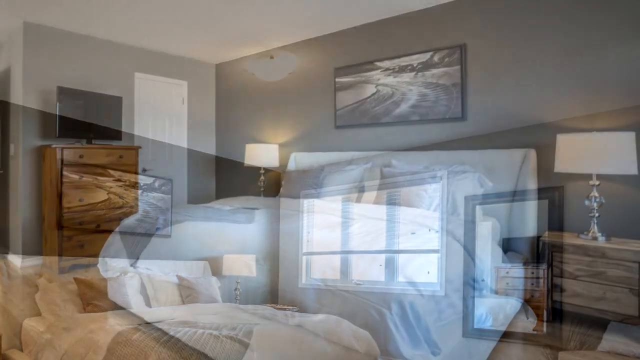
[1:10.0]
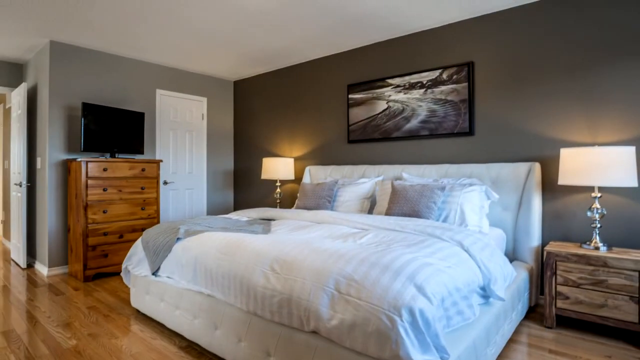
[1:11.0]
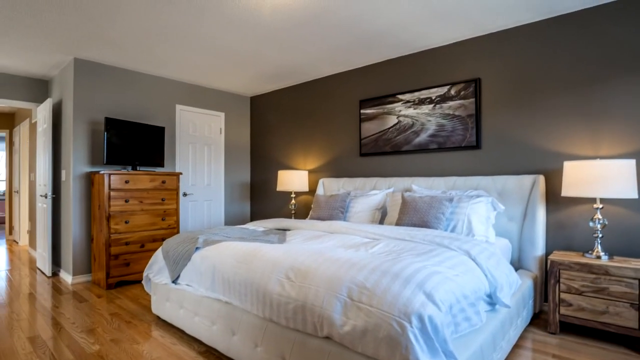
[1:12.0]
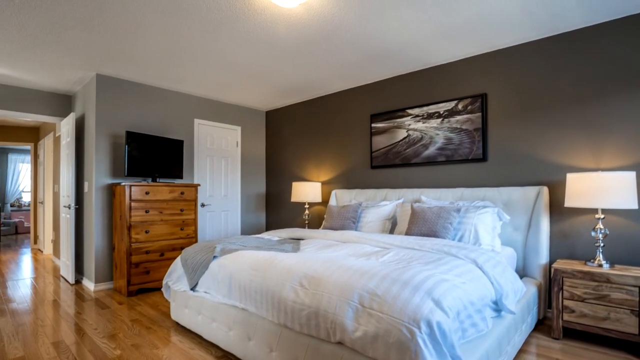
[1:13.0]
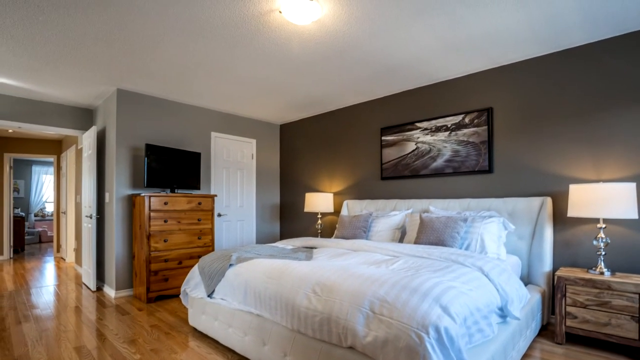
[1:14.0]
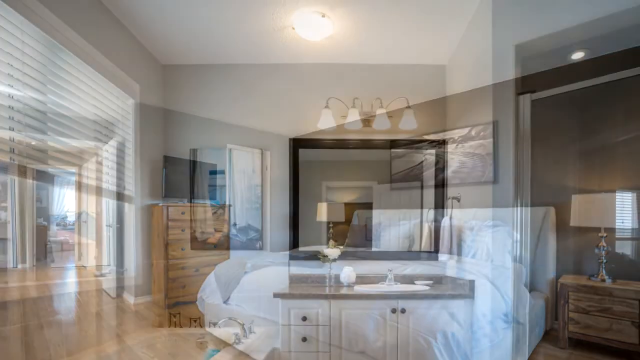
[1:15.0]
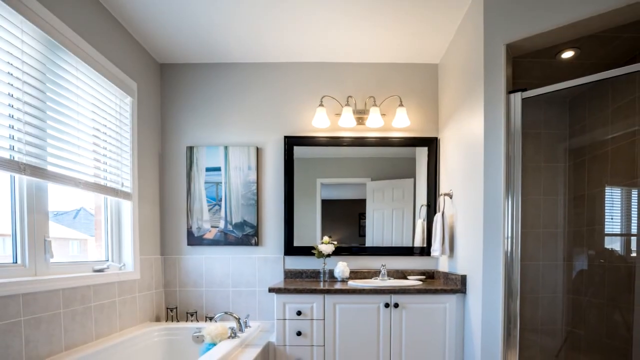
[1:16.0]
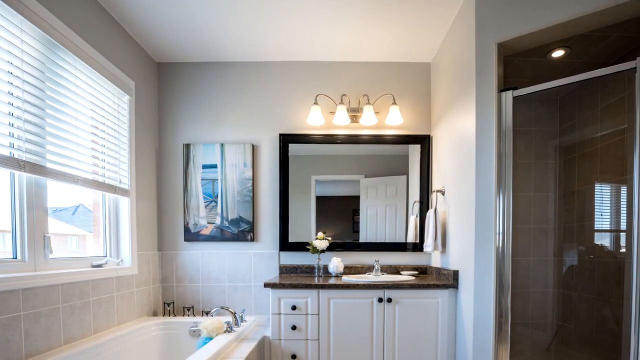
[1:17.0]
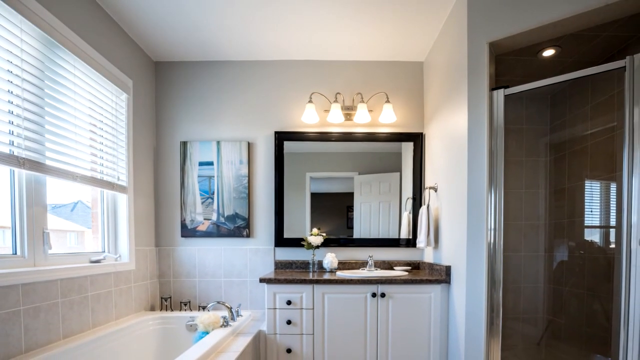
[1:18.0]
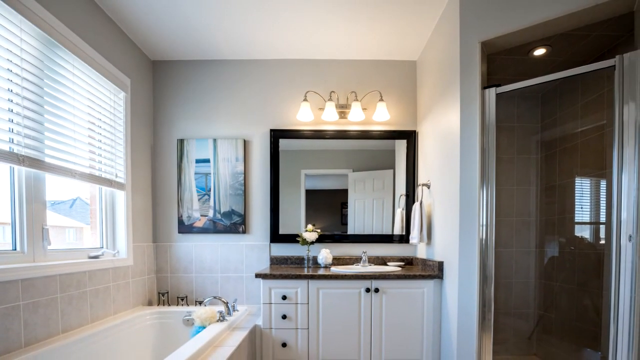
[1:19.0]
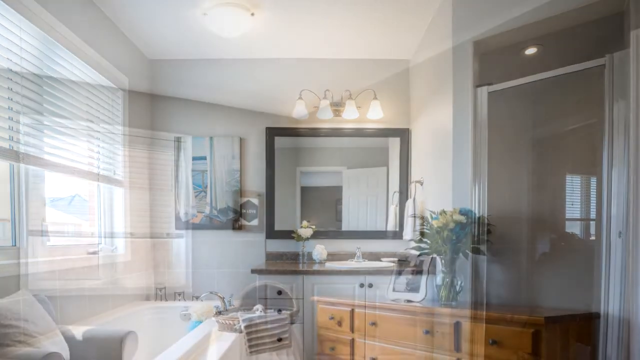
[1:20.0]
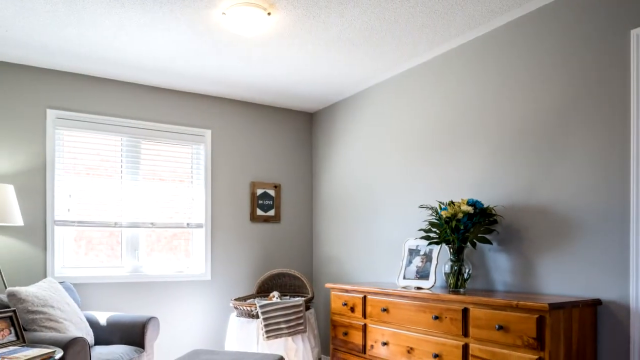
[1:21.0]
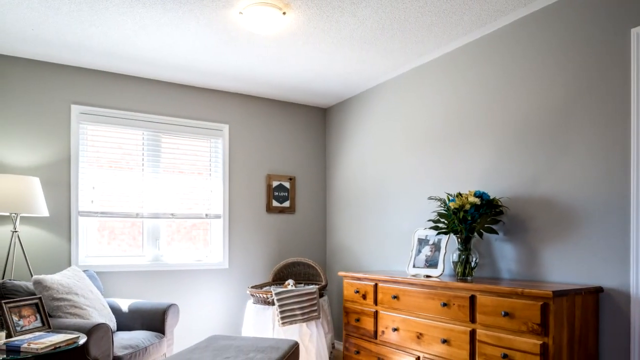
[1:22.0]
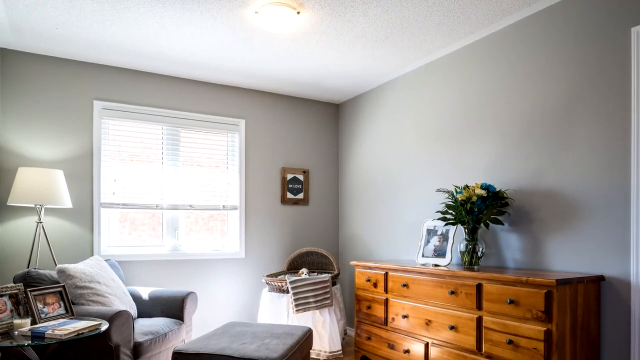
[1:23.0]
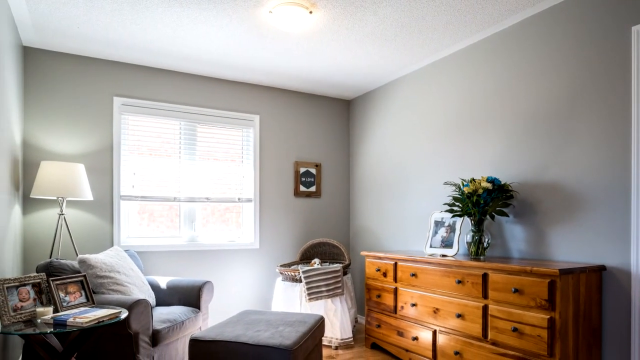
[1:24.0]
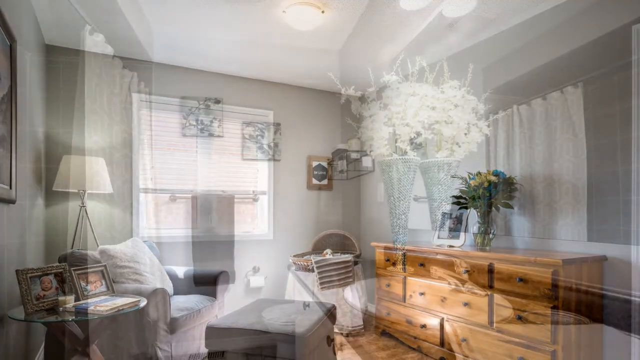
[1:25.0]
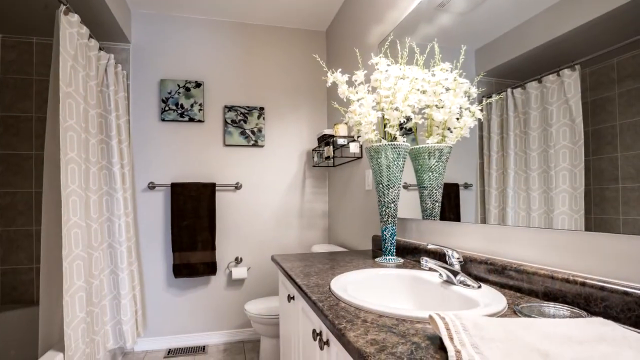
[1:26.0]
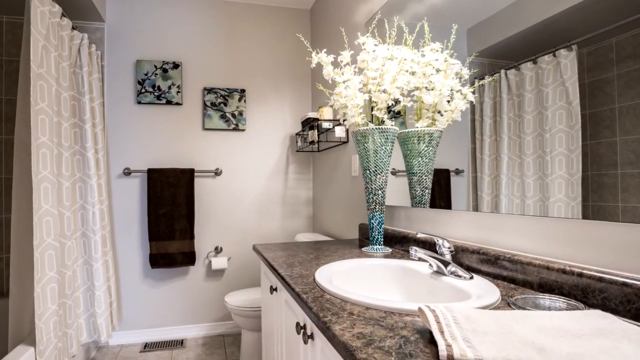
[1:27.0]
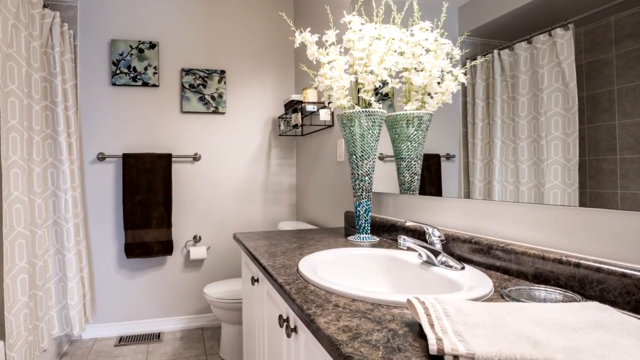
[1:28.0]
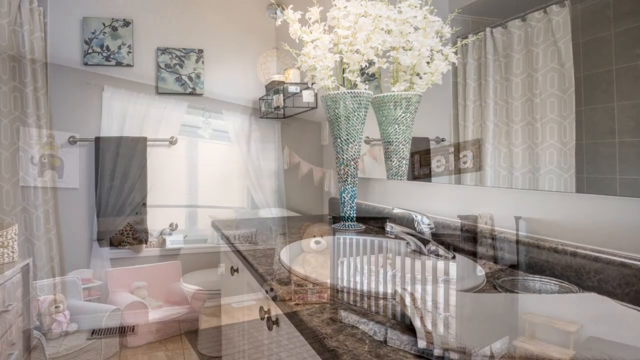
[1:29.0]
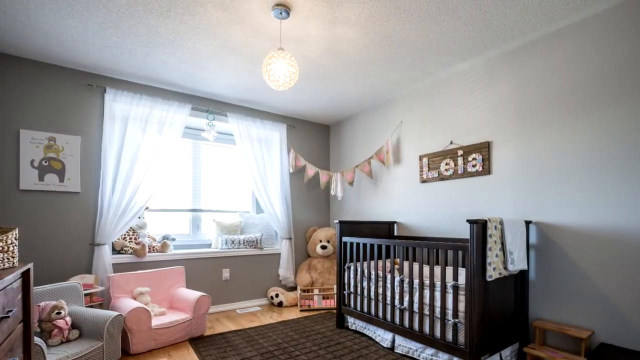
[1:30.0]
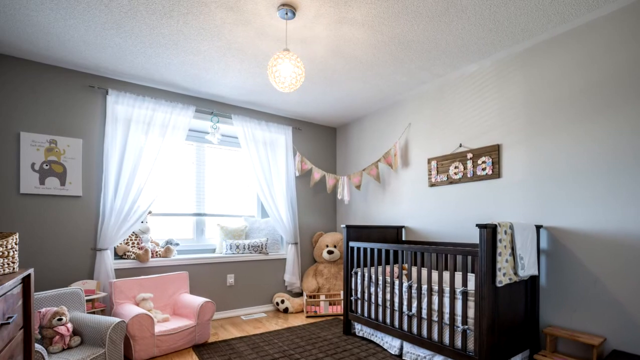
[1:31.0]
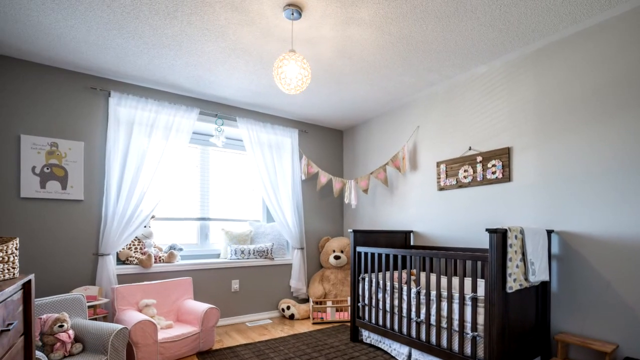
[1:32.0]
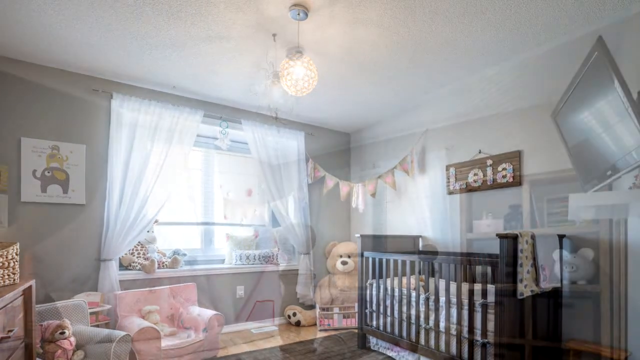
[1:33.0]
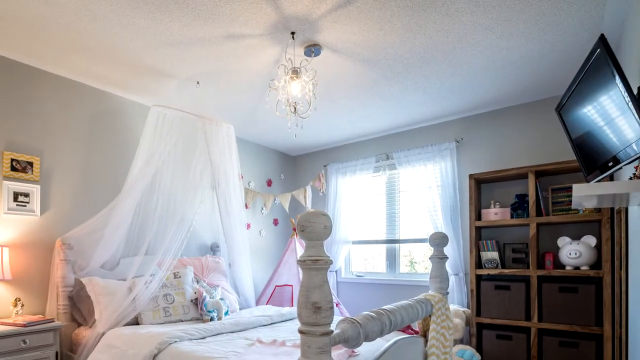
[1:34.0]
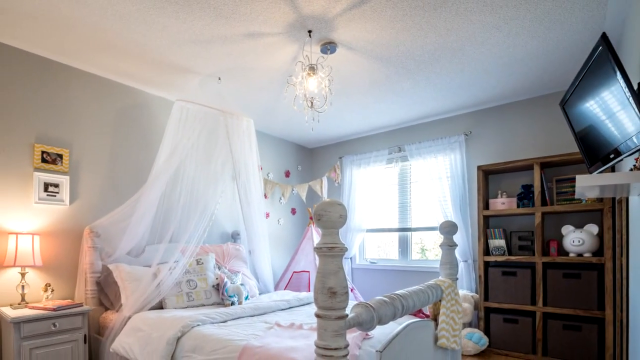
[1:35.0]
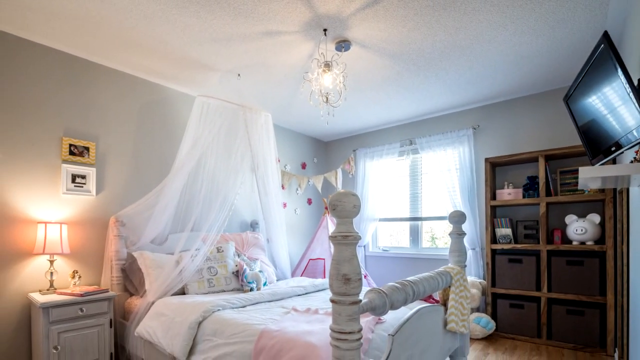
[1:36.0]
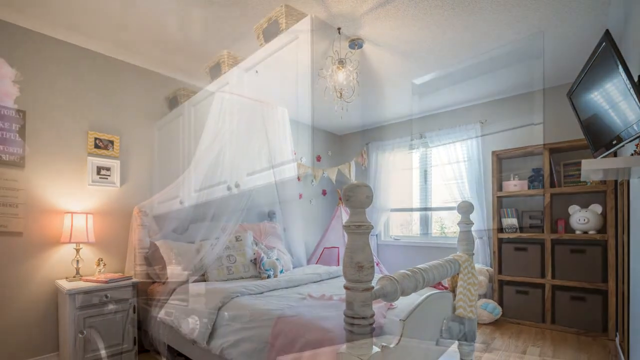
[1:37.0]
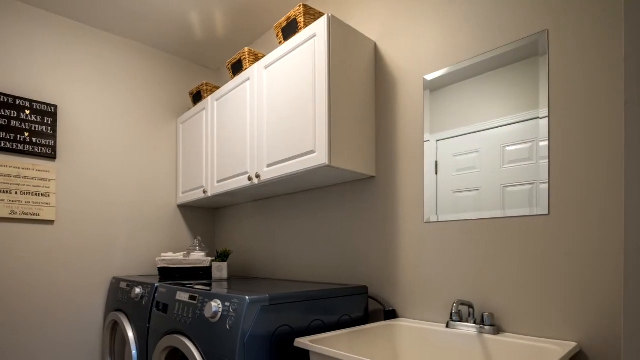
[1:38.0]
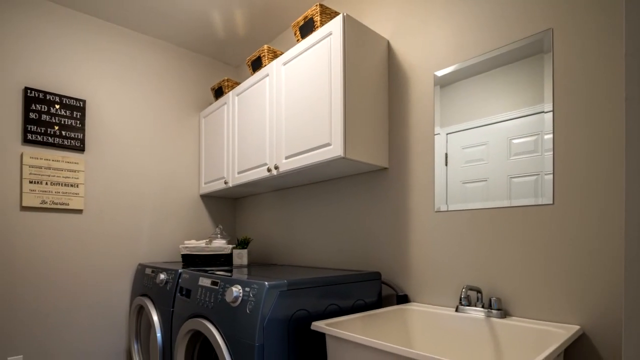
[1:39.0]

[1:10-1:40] A large bedroom contains at least a queen-size bed, a single piece with the mattress and headboard connected. There is a dresser on the left side of the room, and there are nightstands on the left and right sides of the bed, though only the right-side nightstand is seen. The walls are painted light gray and the ceilings are white. A transition shows a large bathroom, implied to be connected to the bedroom, with a large tub, a sink and mirror, and a standing shower. Another transition shows other rooms, including a sitting room and a smaller bathroom, along with a third room that has a crib with a name hung over it and a large window that is open to let light stream in.